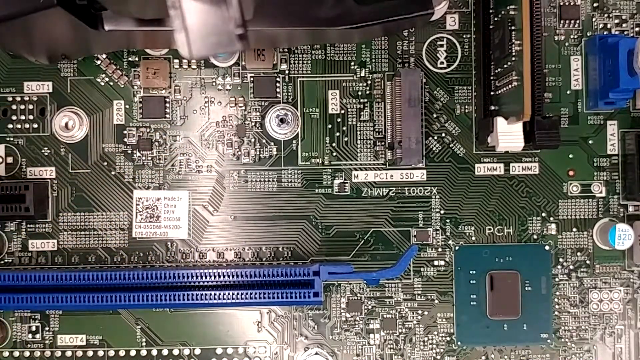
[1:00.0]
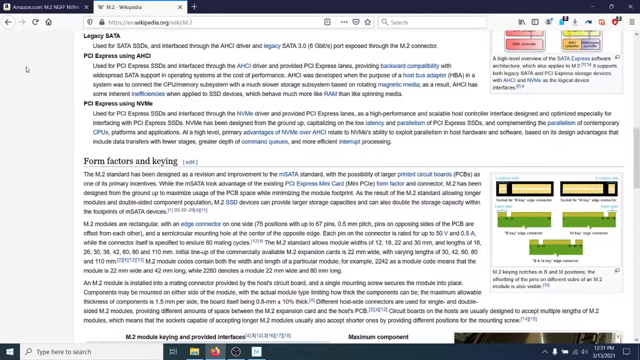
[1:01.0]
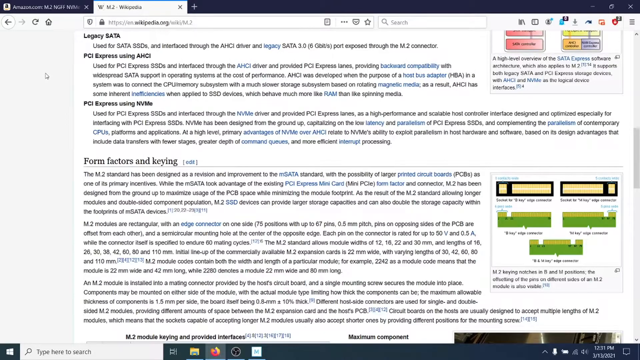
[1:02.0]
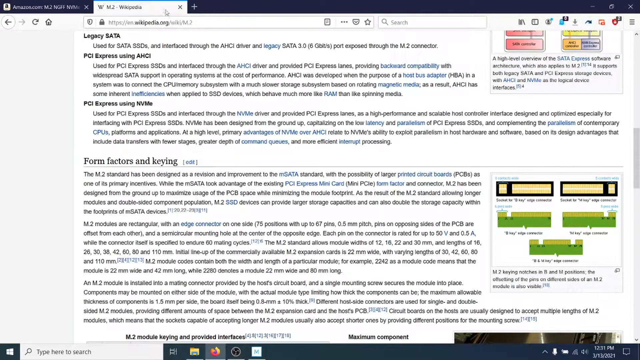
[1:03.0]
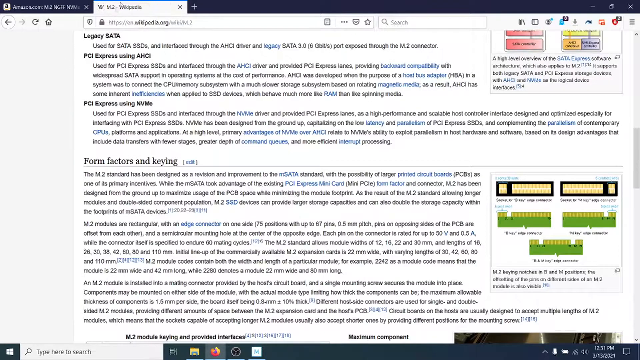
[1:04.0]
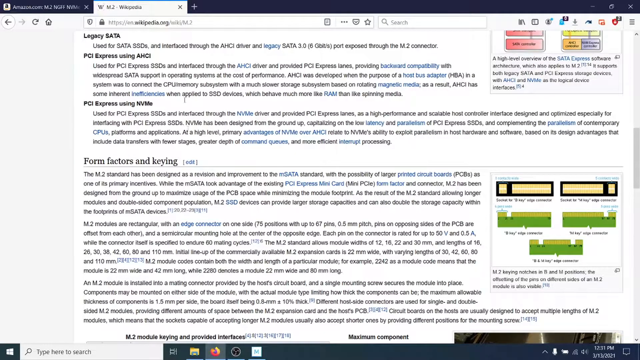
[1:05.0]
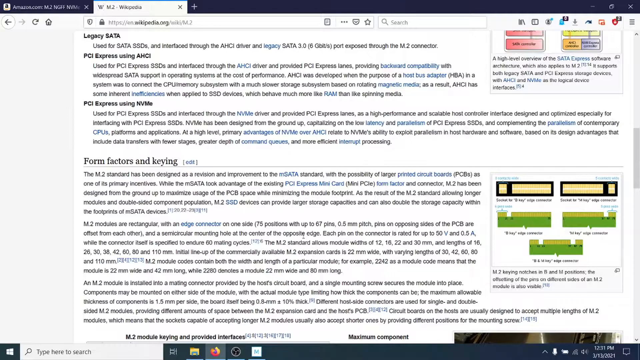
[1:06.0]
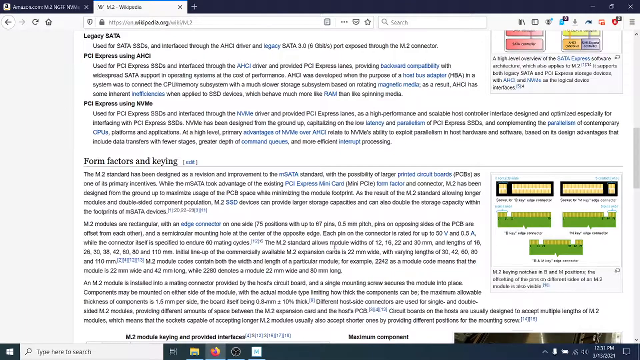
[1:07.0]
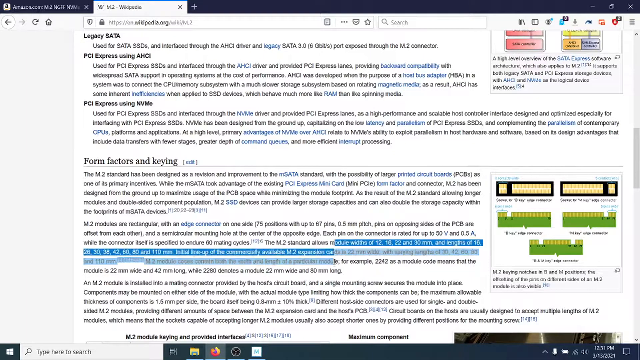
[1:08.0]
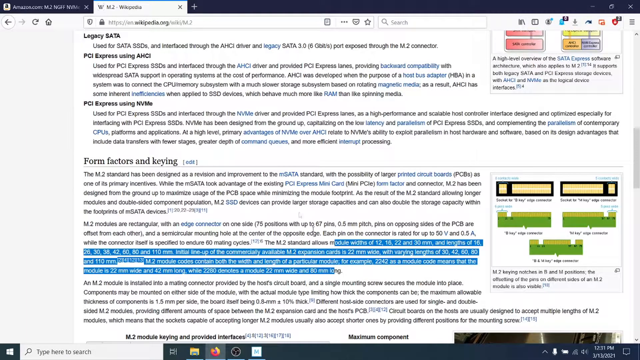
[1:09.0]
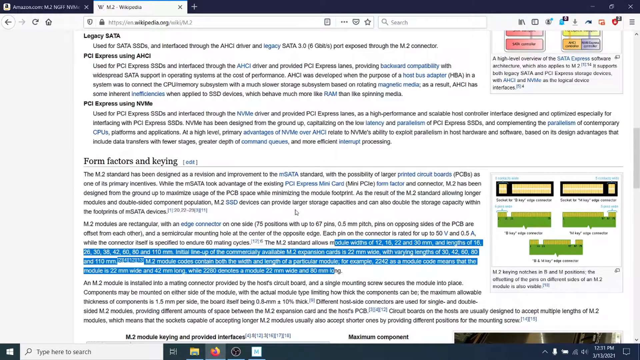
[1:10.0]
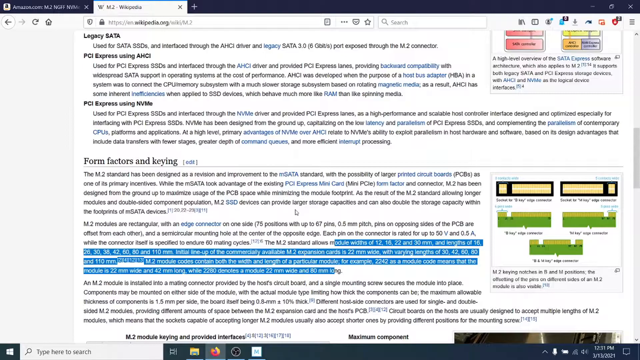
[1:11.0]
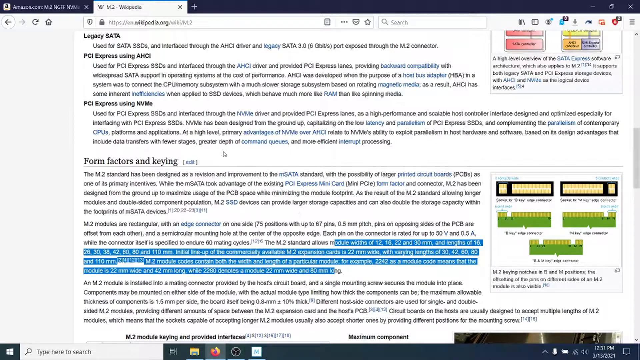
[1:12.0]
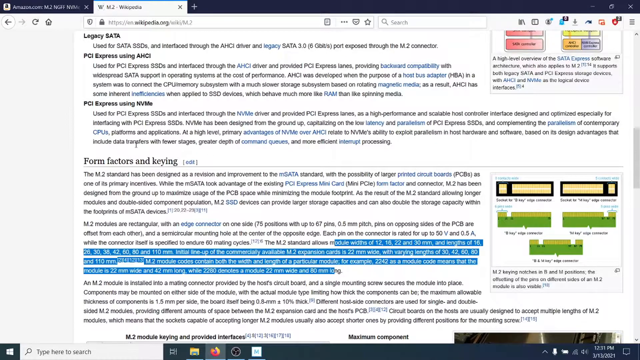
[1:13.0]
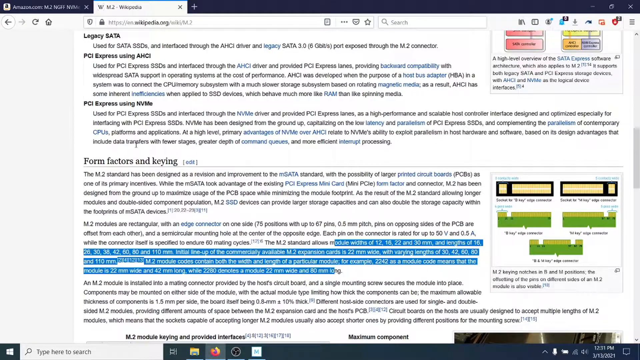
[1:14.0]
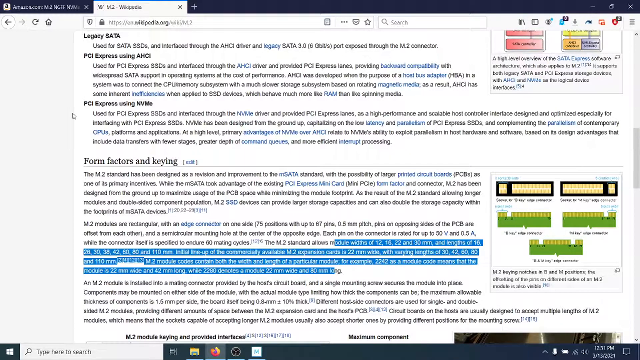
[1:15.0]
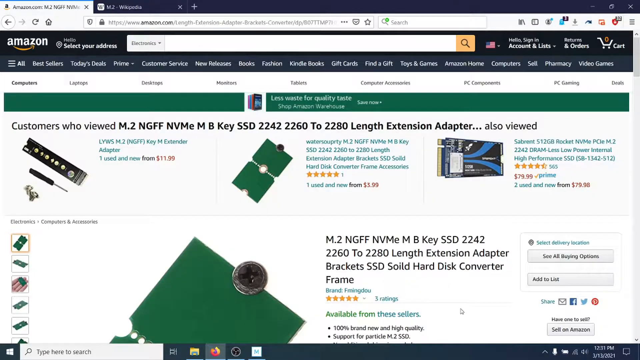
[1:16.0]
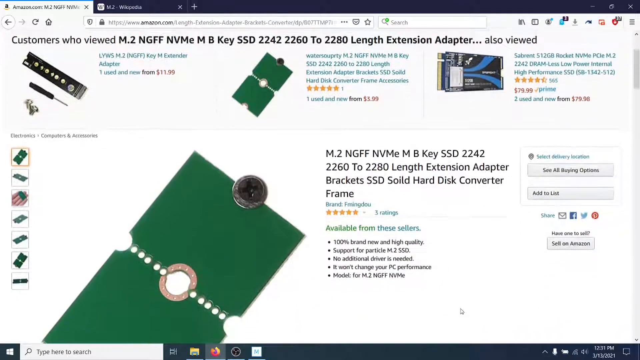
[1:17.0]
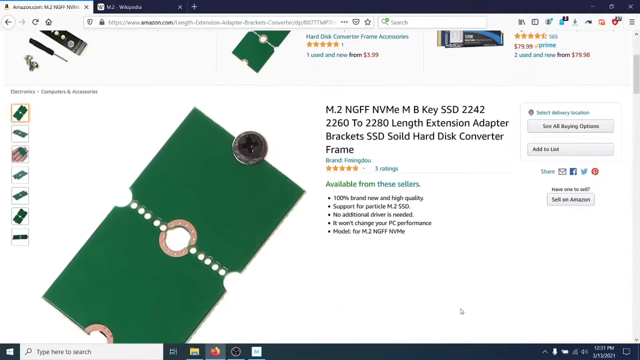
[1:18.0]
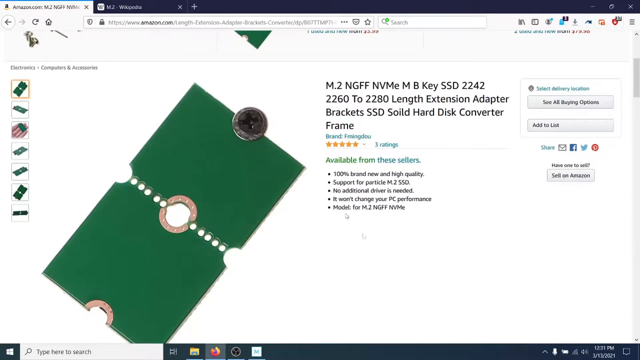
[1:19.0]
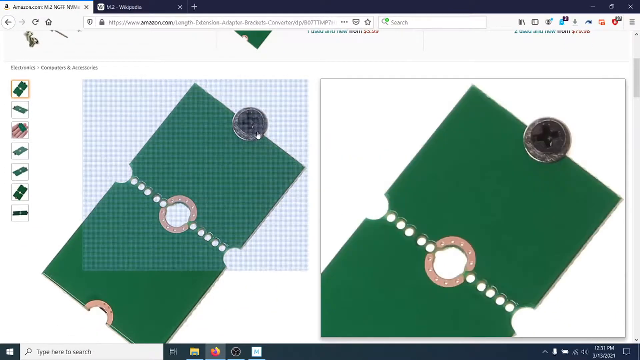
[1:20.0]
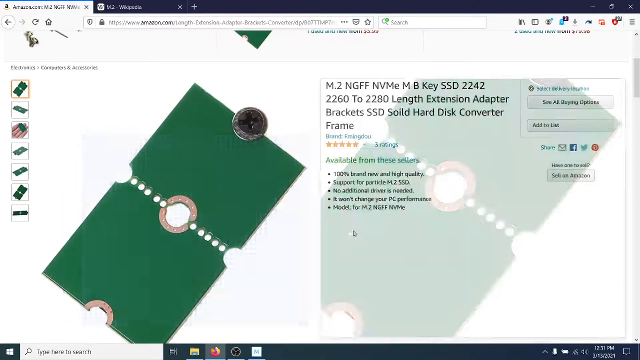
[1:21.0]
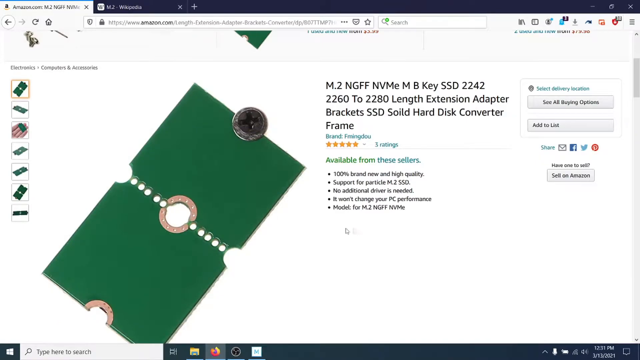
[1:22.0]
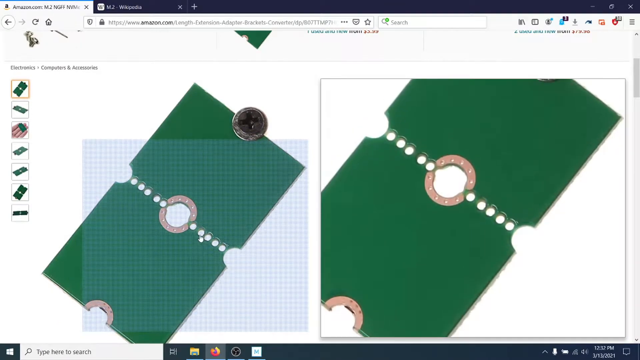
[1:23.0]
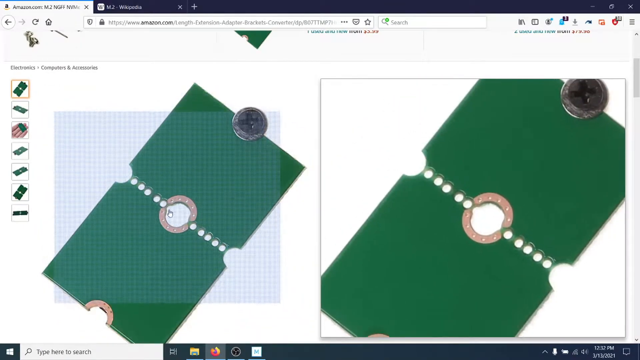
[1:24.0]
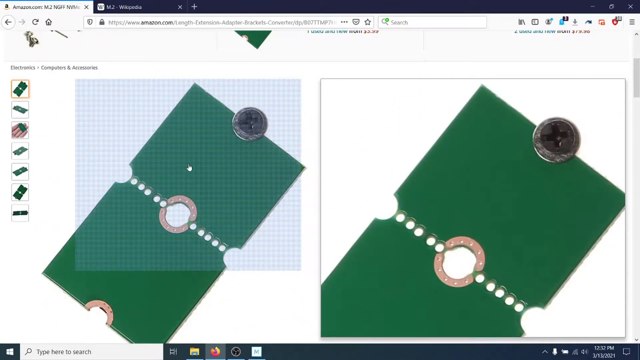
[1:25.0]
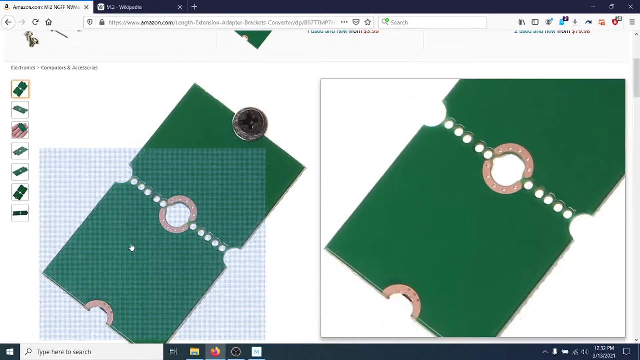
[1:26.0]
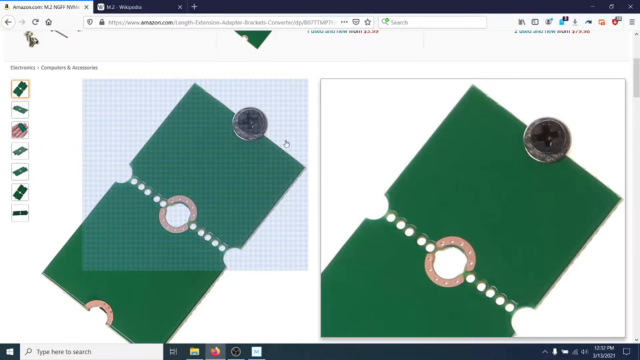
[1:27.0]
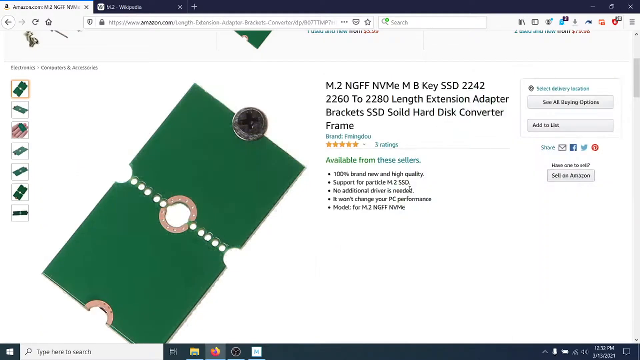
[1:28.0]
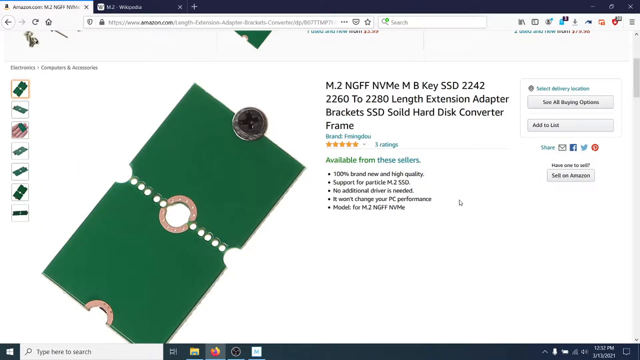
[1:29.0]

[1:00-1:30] The top of the circuit board is shown, with various pieces of hardware and fuses sticking out. The camera then goes to what seems to be a Wikipedia page. A heading reads "form, factors, and key", and the text mentions the M2 standard, reading "has been designed as a revision and improvement to the MSATA standard with the possibility of larger printed circuit boards." About three paragraphs of text are visible on the page. To the right are what look like circuits similar to the ones shown earlier: two long black ones at the top, and below them two long circuits that seem to be a different colour, maybe the back of them; it is hard to tell, and the font cannot be made out. Up top there is information in another section that is not really labeled, with some subsections, and the right side has a similar format.